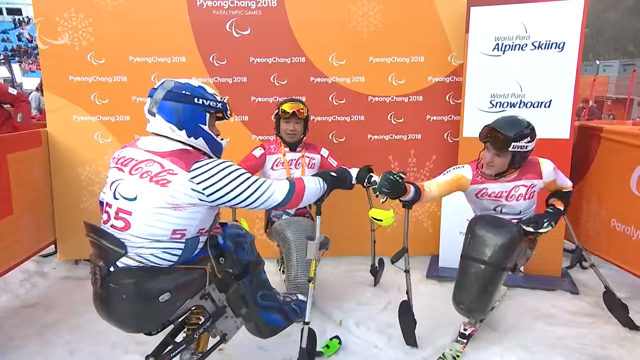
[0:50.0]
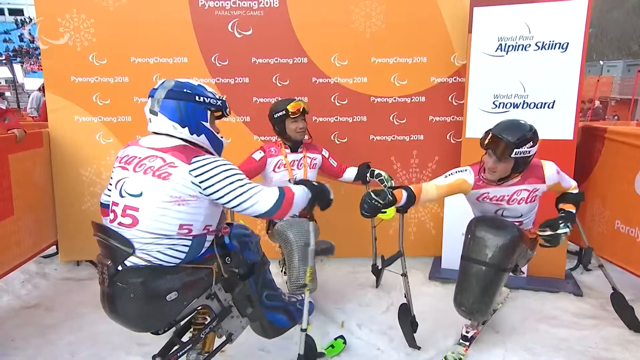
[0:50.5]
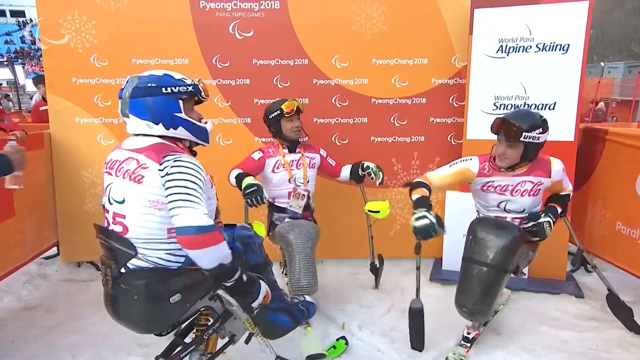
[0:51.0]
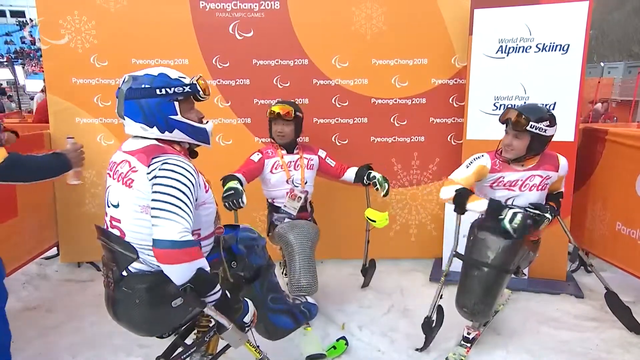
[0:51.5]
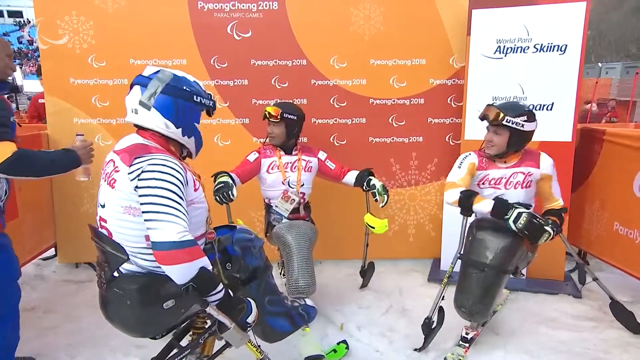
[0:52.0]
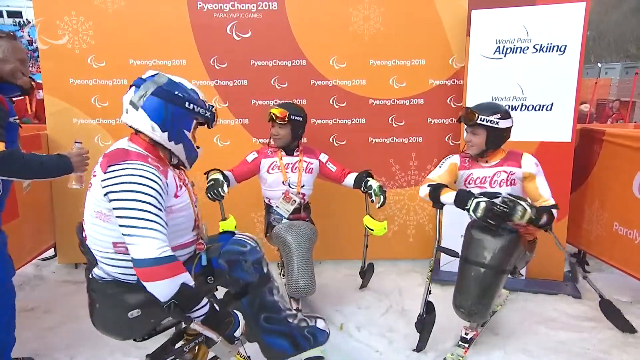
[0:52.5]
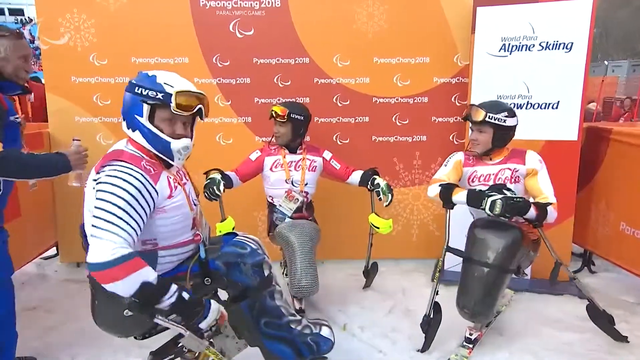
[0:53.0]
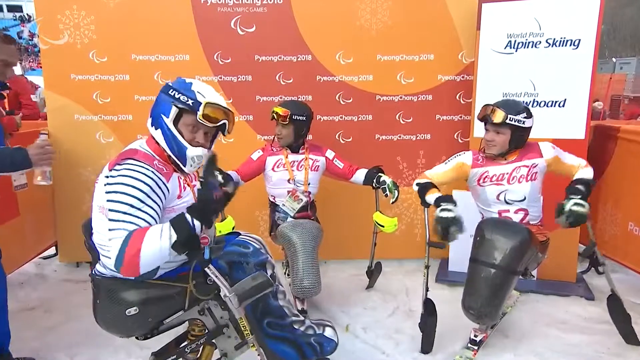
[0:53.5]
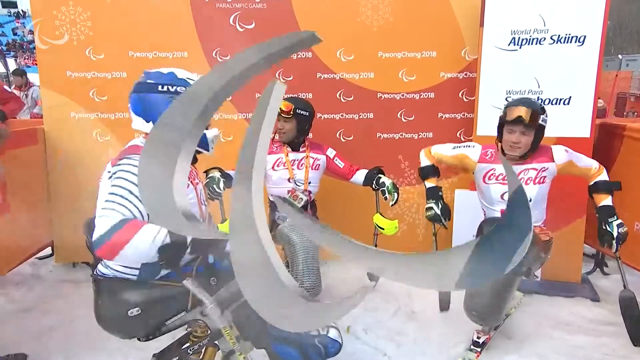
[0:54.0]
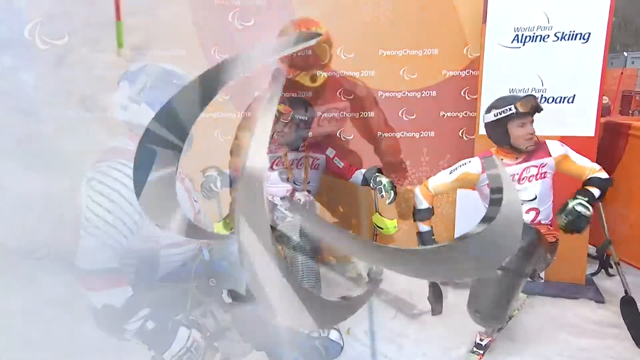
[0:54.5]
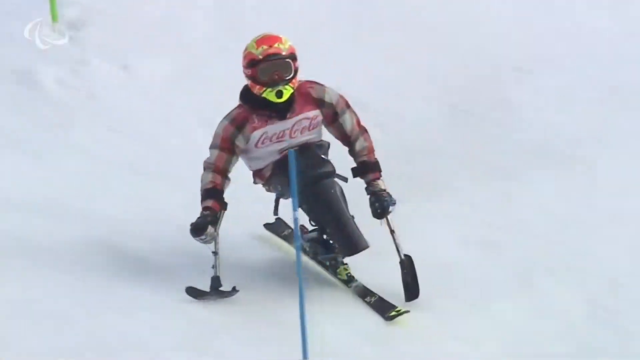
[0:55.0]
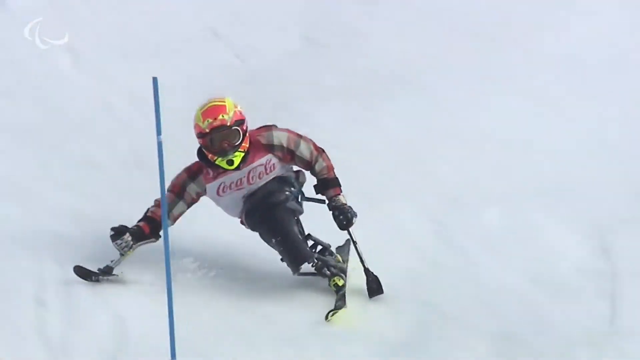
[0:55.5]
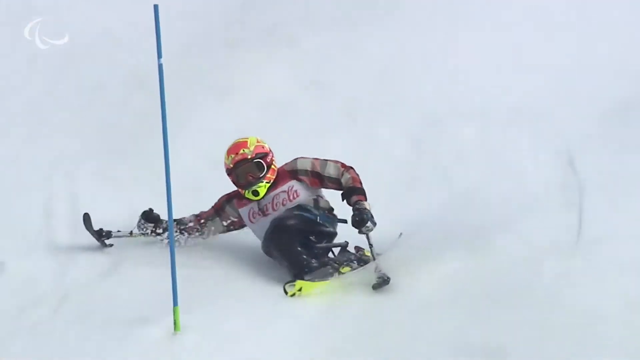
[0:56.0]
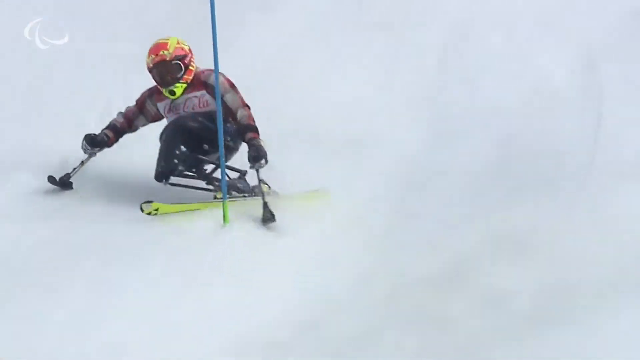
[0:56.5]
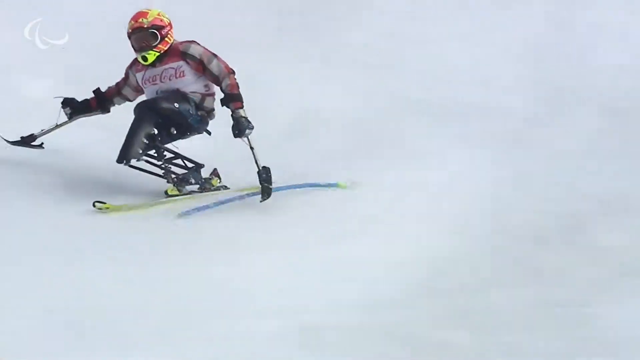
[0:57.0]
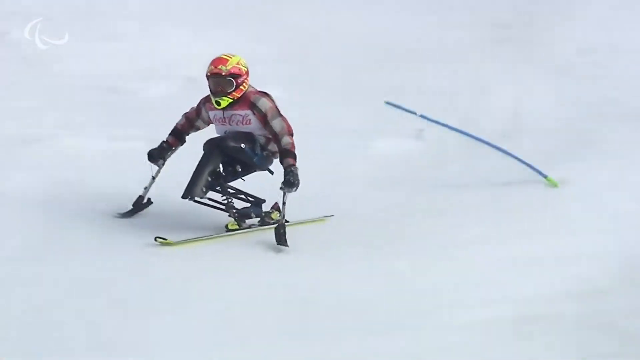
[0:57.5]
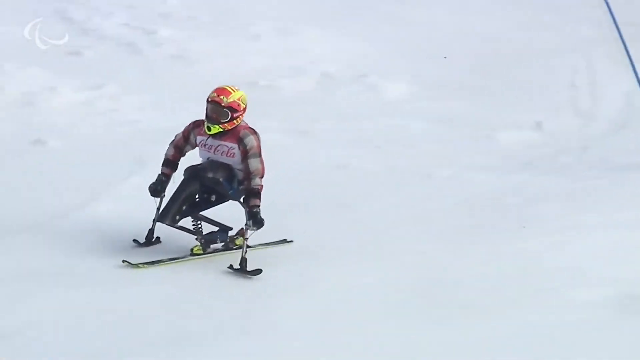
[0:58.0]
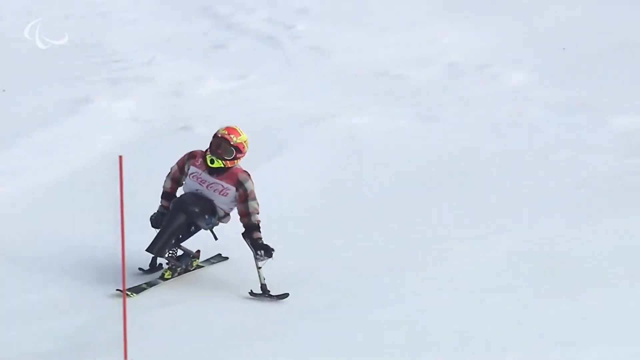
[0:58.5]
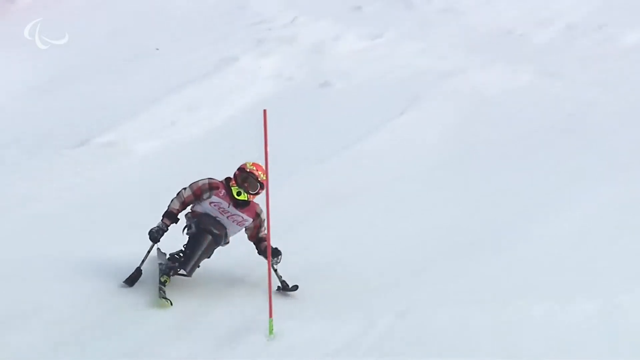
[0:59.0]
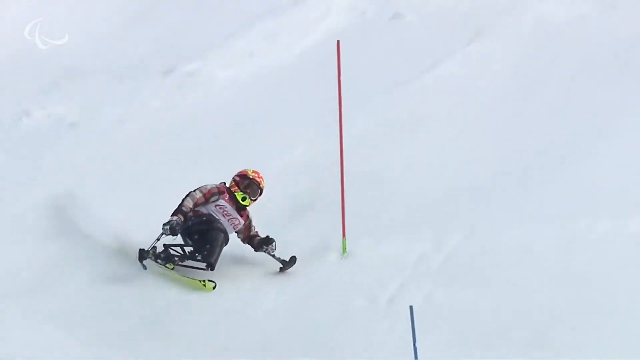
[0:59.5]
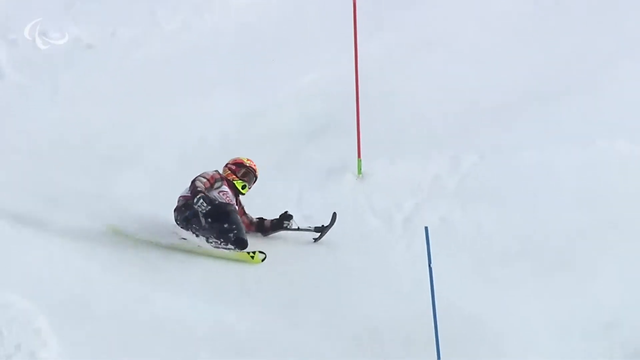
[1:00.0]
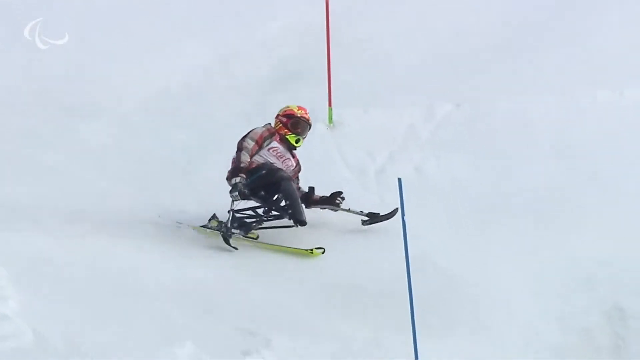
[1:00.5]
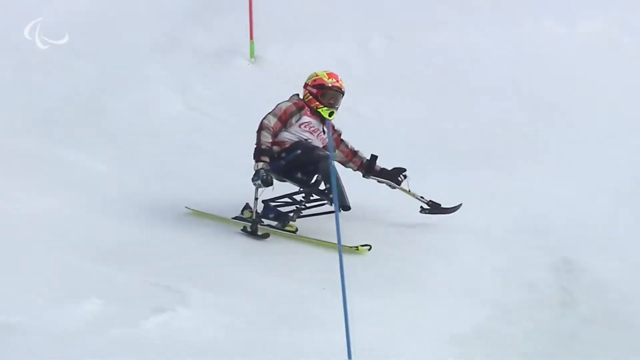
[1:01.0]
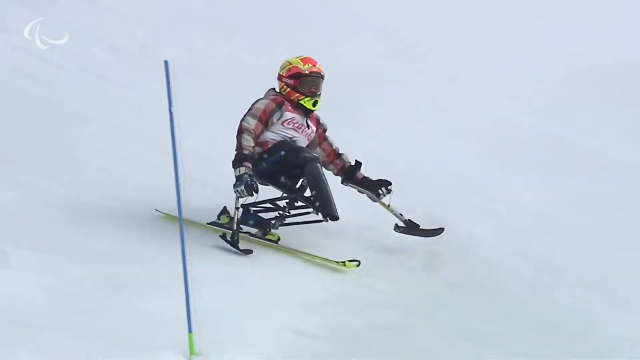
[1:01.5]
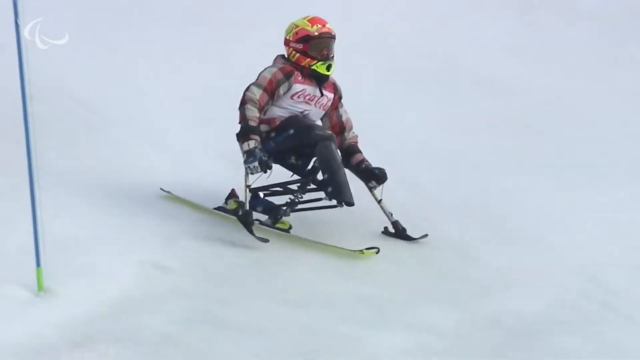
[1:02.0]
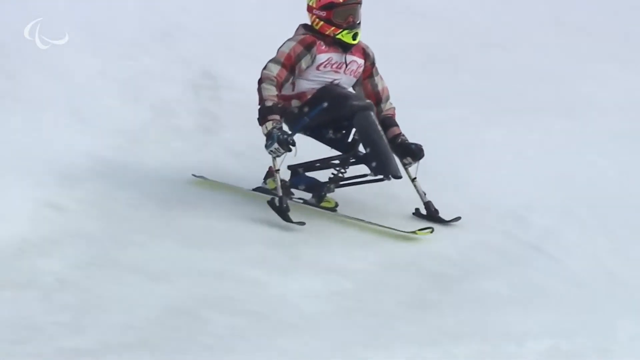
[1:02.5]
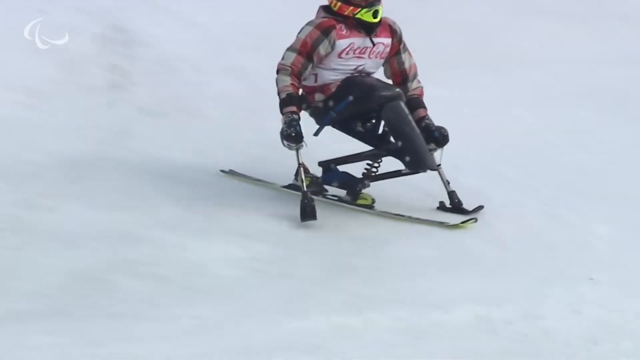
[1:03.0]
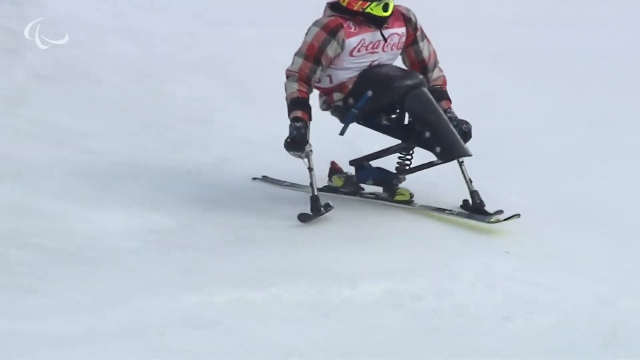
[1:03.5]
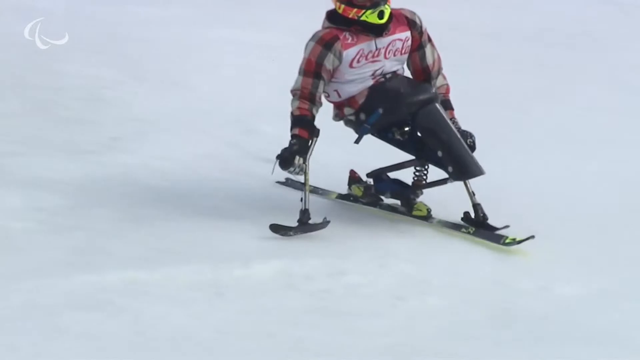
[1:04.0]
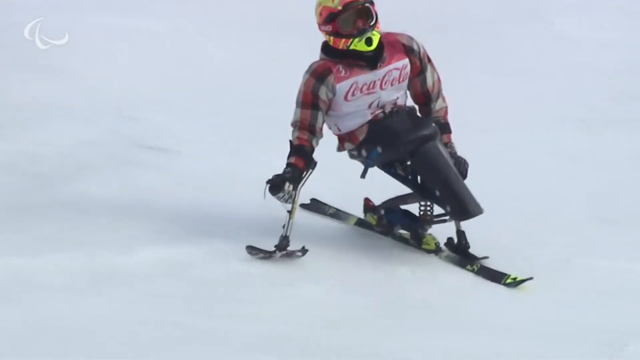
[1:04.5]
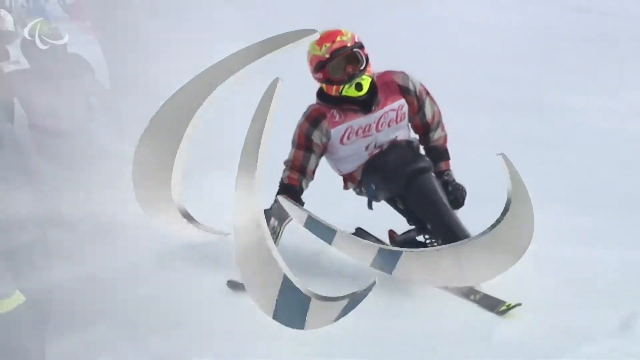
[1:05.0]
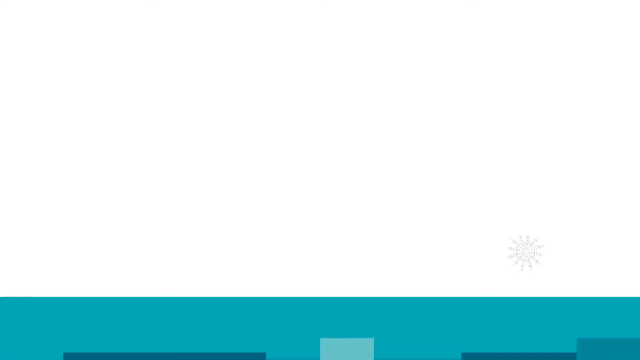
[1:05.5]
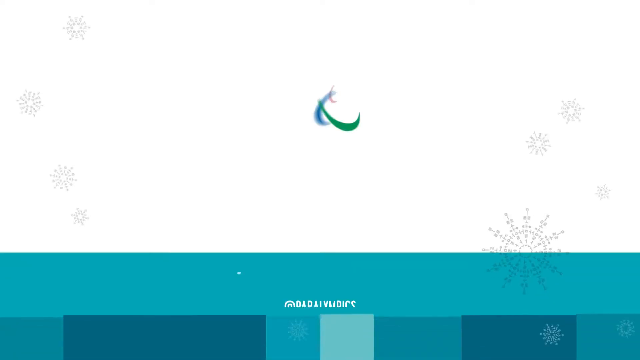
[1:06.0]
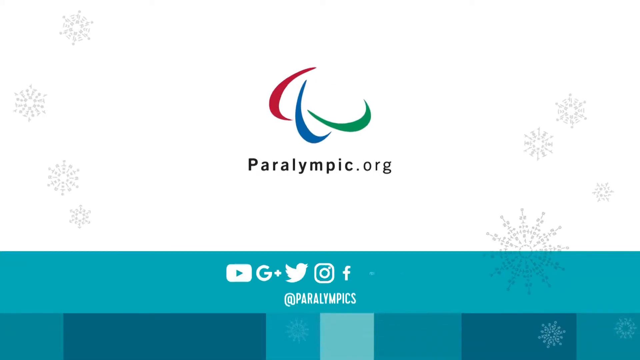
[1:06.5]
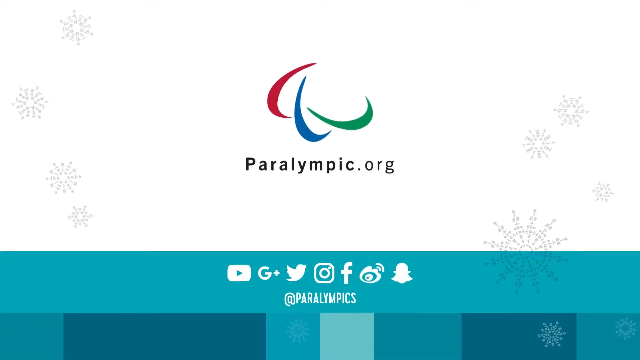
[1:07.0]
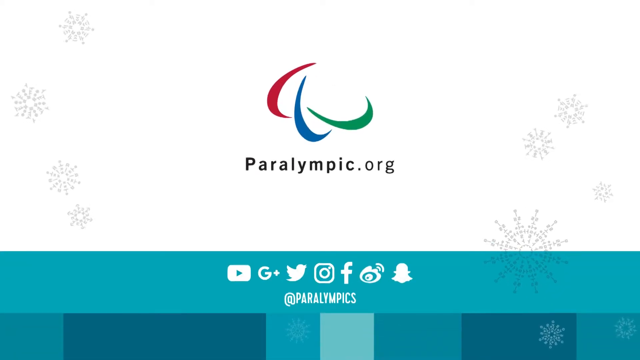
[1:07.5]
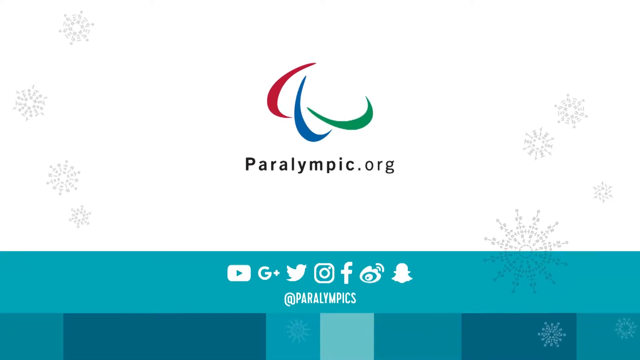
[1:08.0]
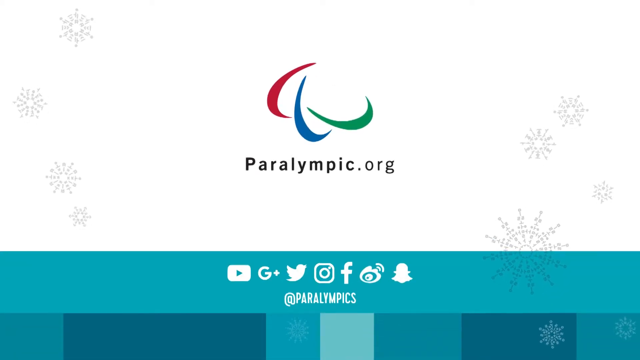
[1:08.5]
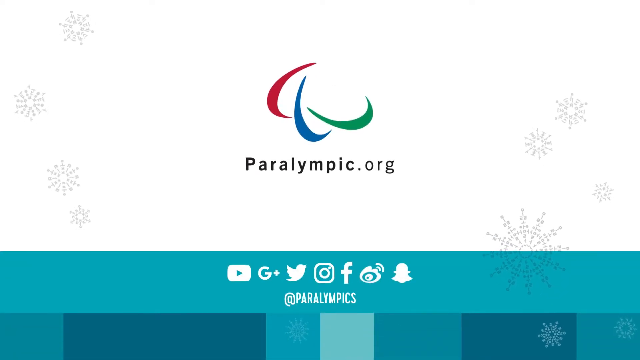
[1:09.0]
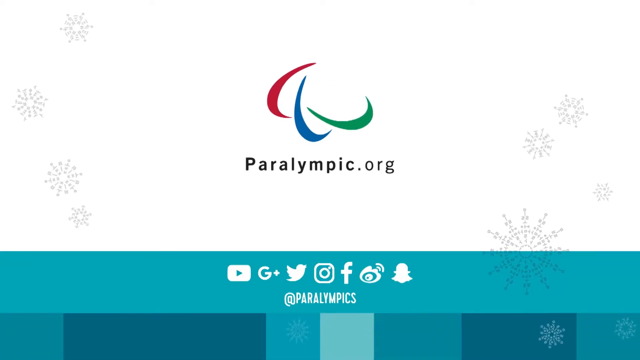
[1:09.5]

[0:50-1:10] What looks like an interaction between three Paralympians takes place in front of a background that says "Pyeongchang 2018" and a white poster that says "World Para Alpine Skiing World Para Snowboard" in blue text. The three sit in a circle facing each other, all wearing jerseys with a Coca-Cola logo; the man on the left is number 55. They look most likely to be amputees or paralyzed athletes, and they are still wearing their helmets and ski gear. The carpet below them is gray. In the upper left corner there might be some people behind the setup in stands with blue seats. The background colors are orange and red, with white writing.